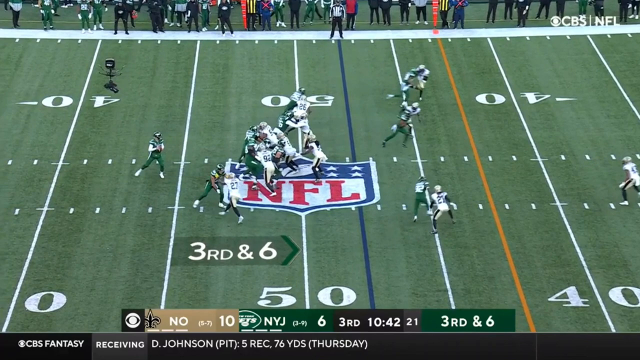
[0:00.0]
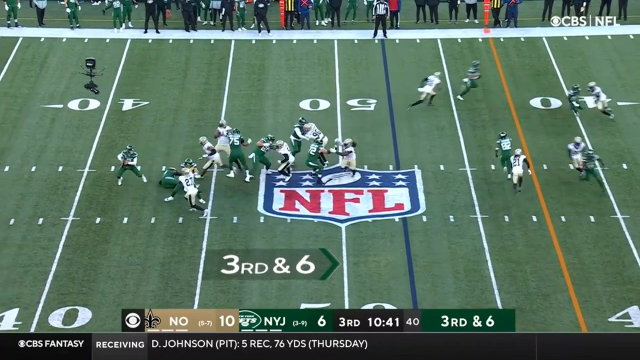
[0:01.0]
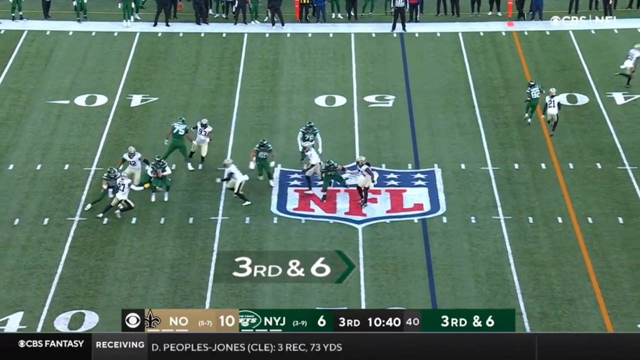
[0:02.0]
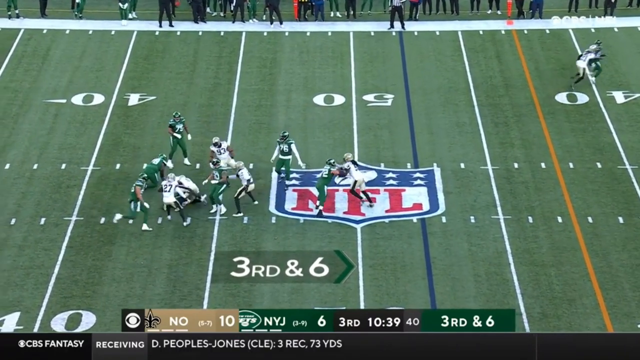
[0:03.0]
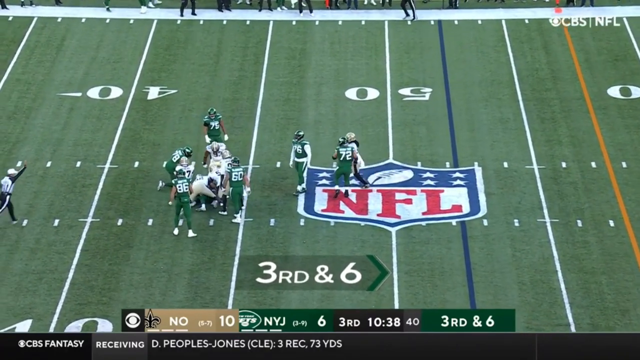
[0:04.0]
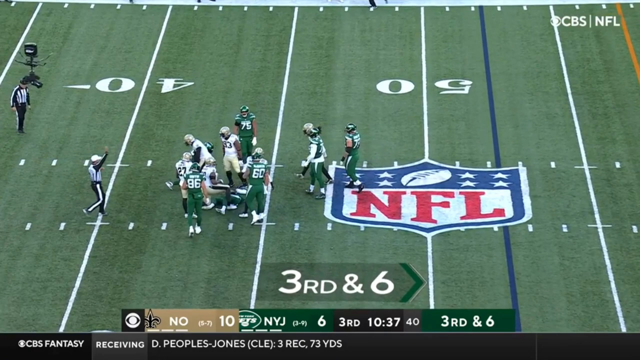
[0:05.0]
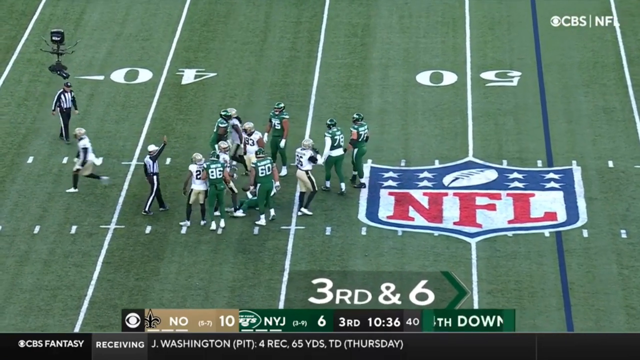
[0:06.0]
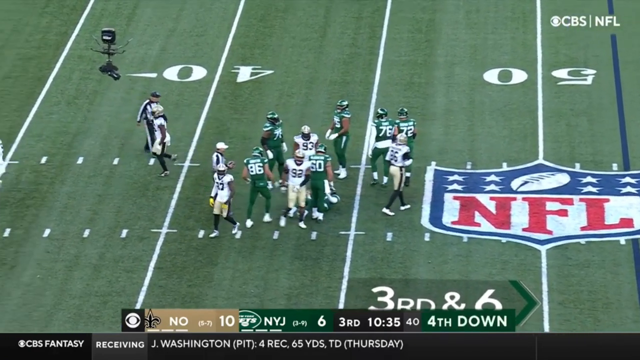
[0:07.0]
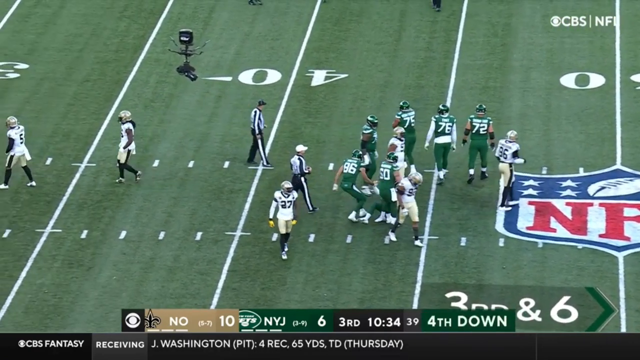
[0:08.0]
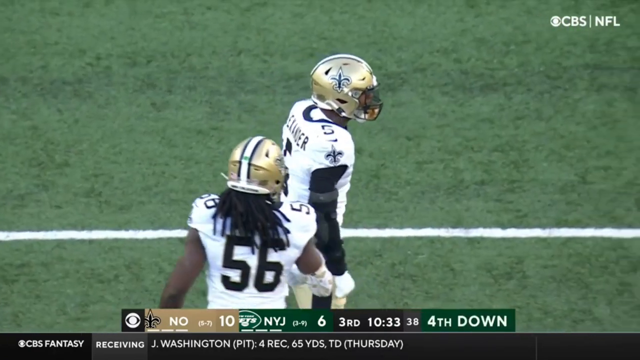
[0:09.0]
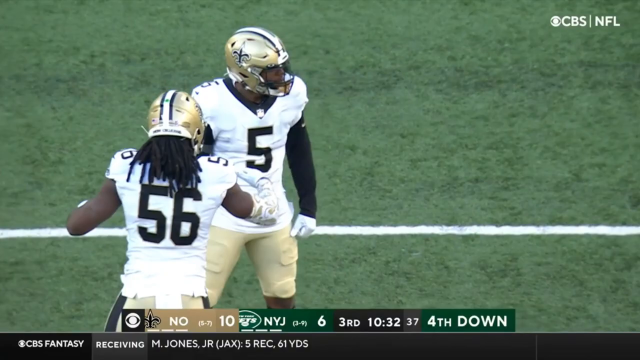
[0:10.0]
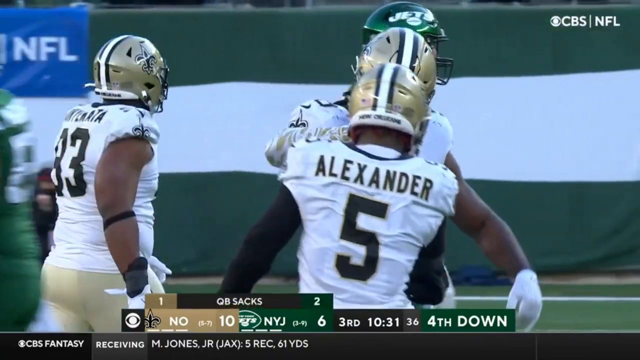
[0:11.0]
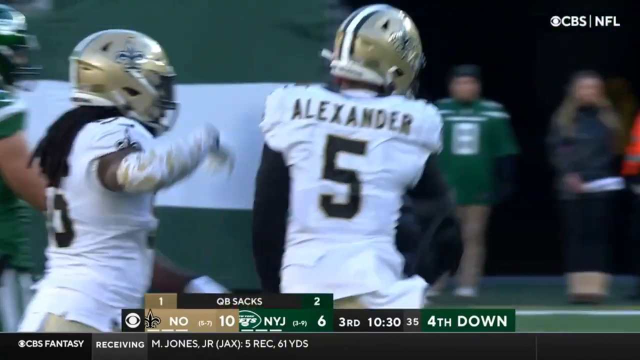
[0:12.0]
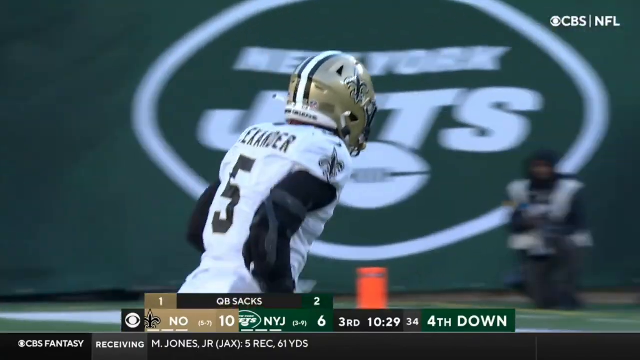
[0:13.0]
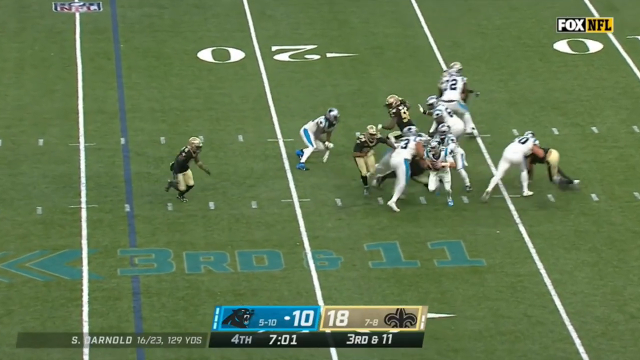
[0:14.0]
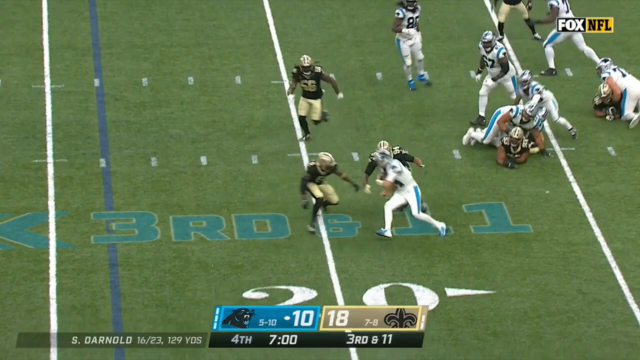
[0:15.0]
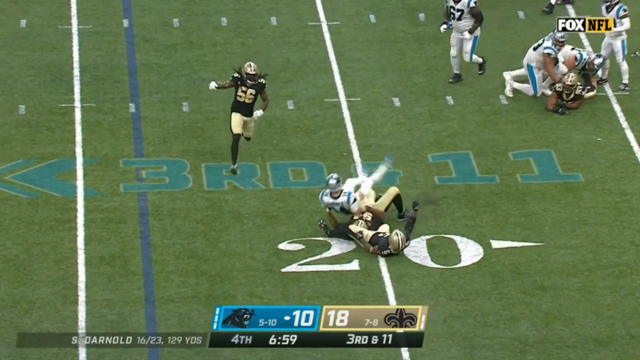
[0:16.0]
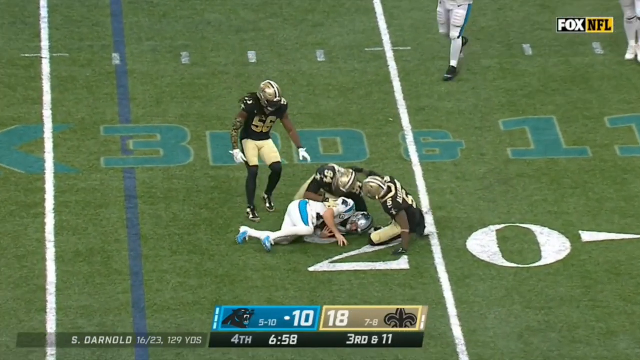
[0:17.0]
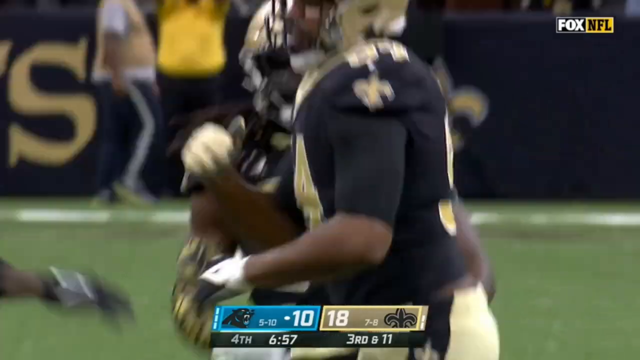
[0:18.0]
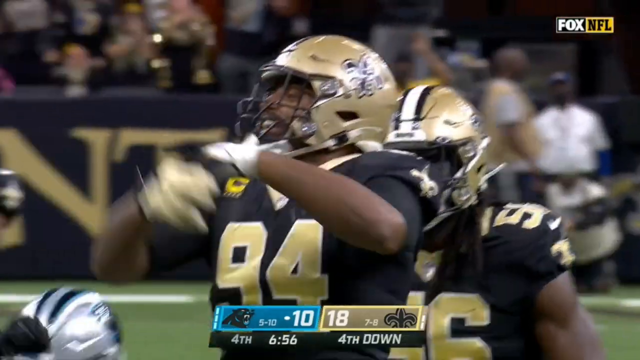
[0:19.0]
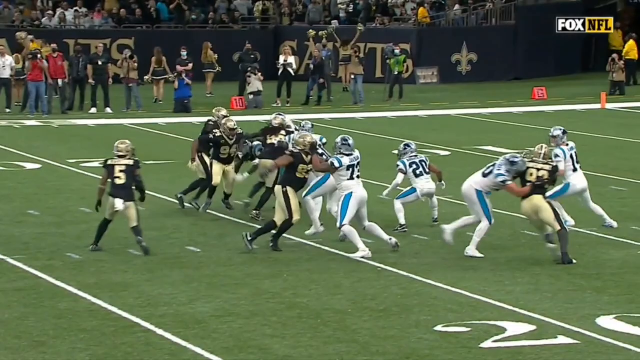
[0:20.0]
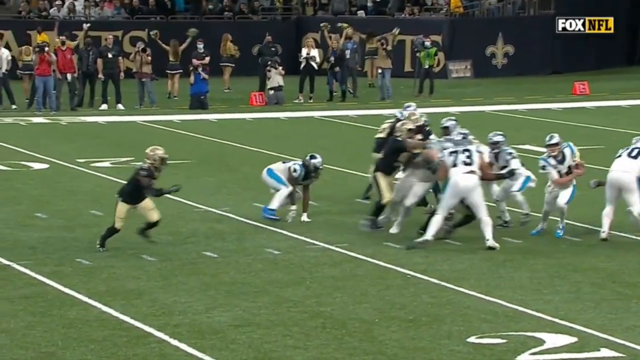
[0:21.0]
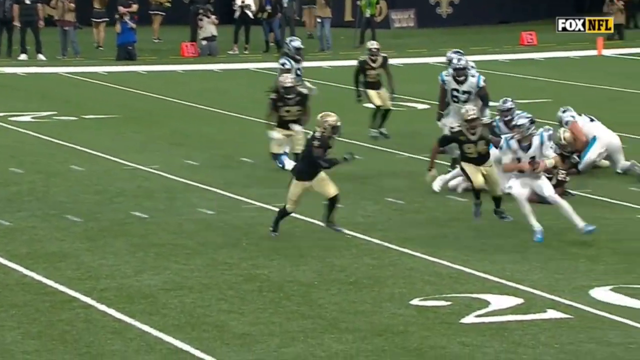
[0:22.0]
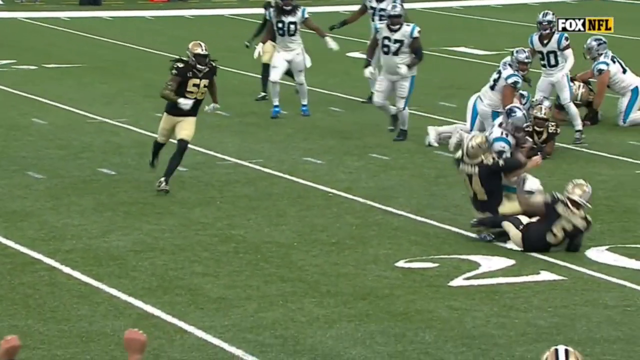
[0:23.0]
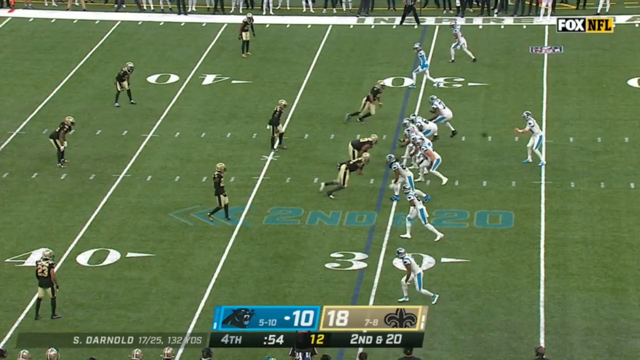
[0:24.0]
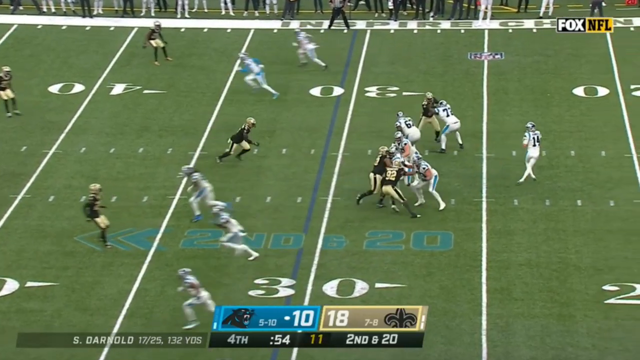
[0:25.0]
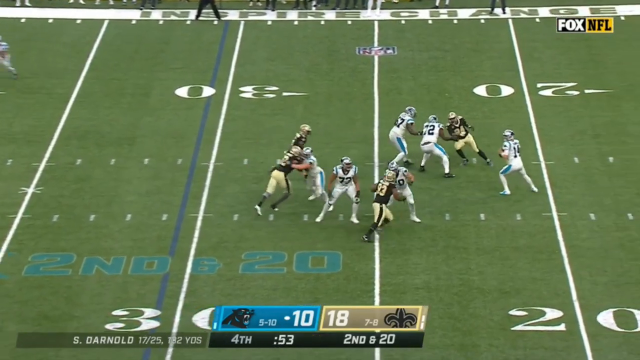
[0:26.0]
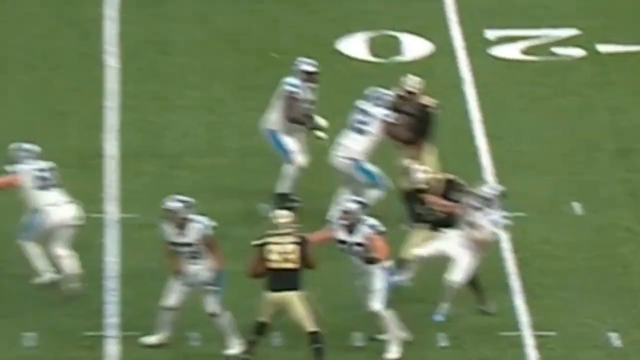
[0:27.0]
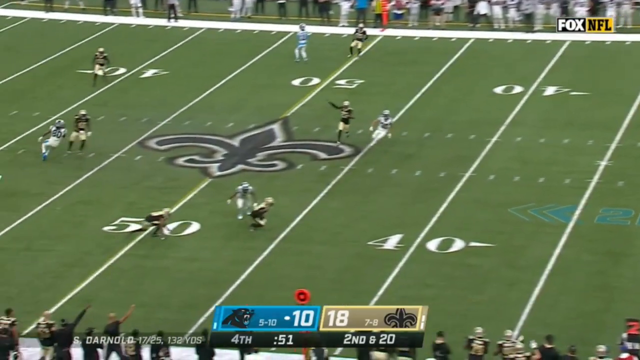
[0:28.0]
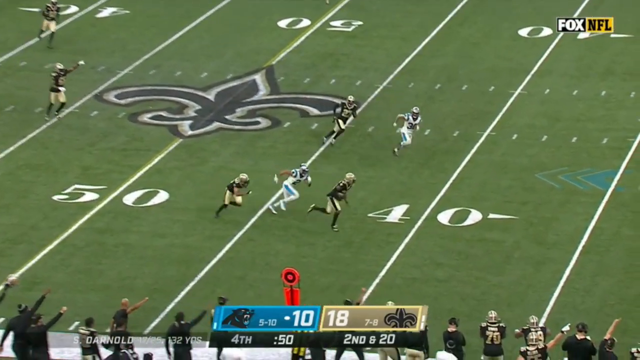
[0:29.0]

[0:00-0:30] An NFL football game between the Saints and the New York Jets is at third and six; the quarterback's identity is unclear. The Saints rush the quarterback, who comes out of the pocket, is faced by a linebacker and goes down, tackled by number 5, Alexander. The video appears to be a set of Saints defensive highlights. Another game follows: the Panthers versus the Saints in the fourth quarter, with the Saints up by eight. The quarterback, Sam Darnold, gets tackled by the Saints defense. The Saints then move to tackle Darnold again and block his pass; Darnold throws a very low pass that gets intercepted.